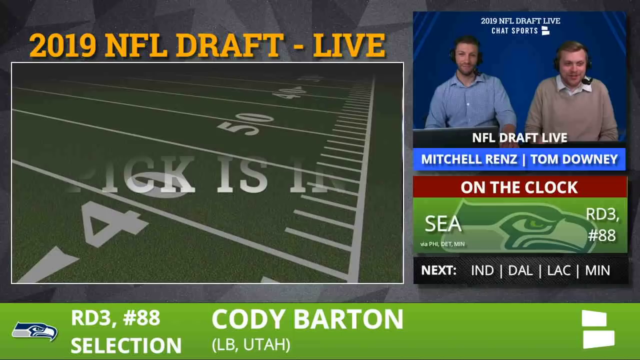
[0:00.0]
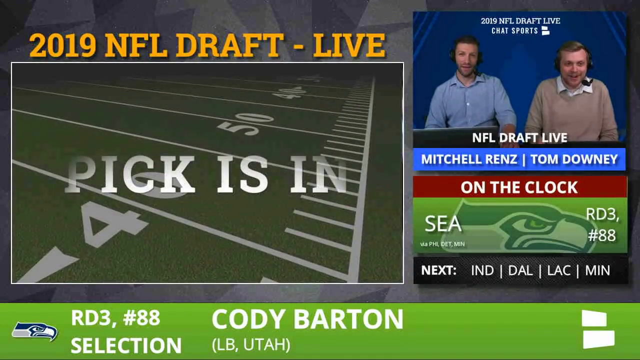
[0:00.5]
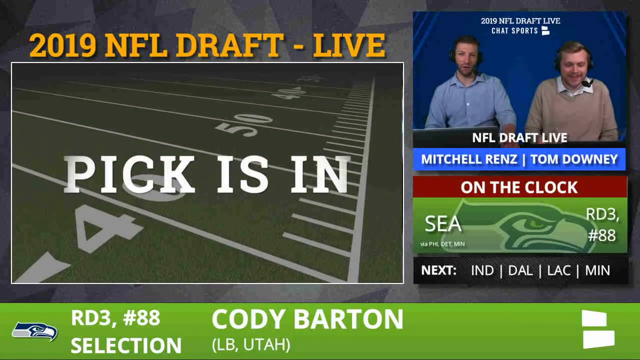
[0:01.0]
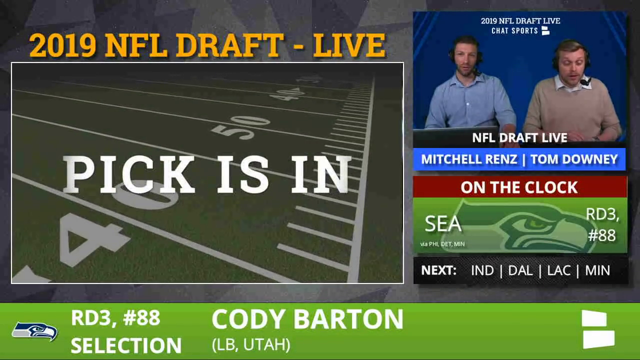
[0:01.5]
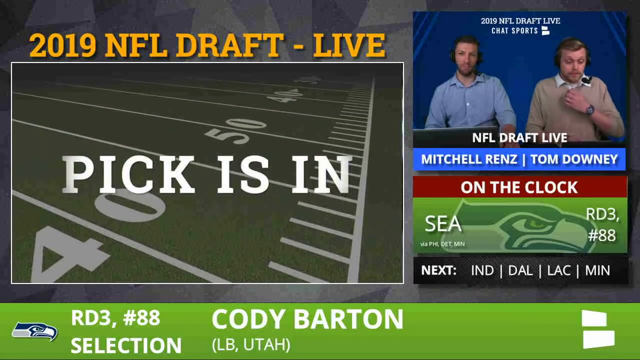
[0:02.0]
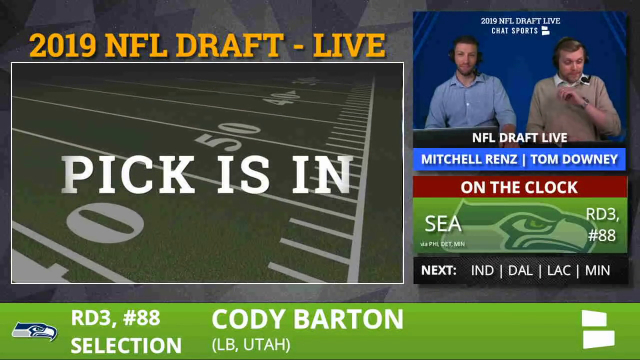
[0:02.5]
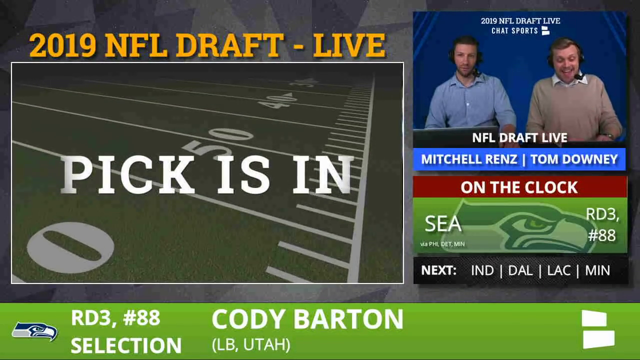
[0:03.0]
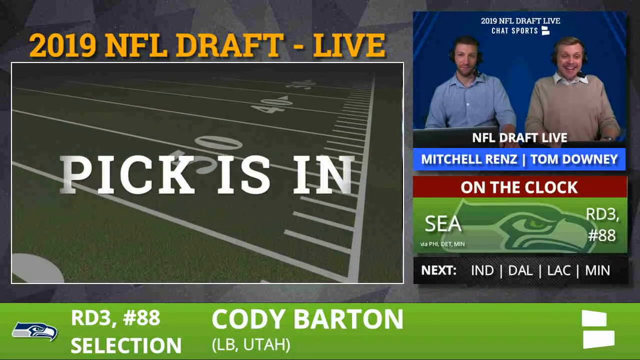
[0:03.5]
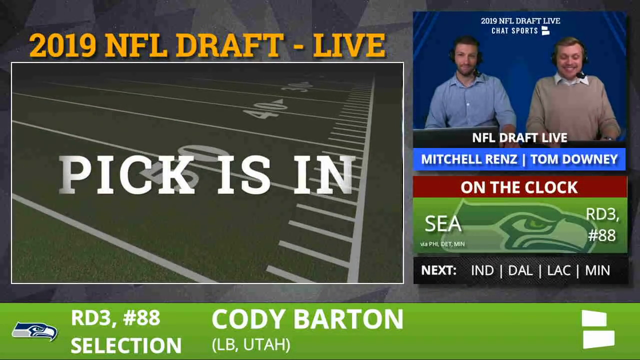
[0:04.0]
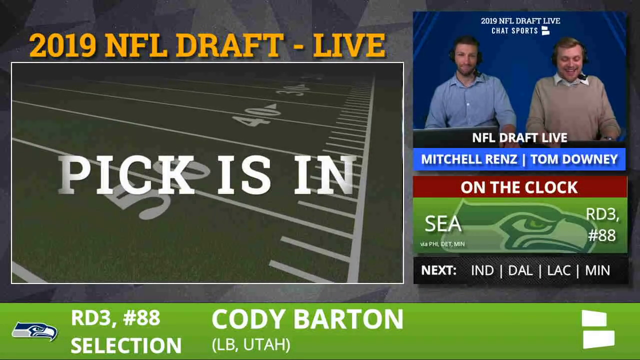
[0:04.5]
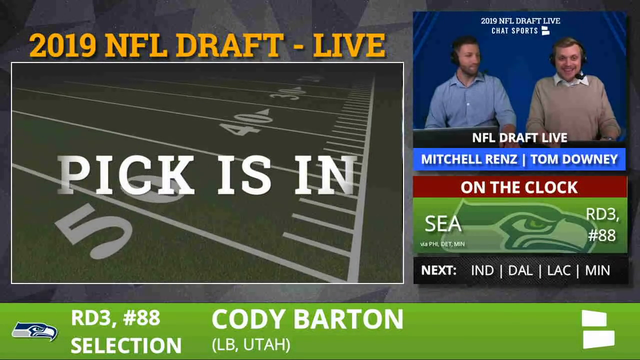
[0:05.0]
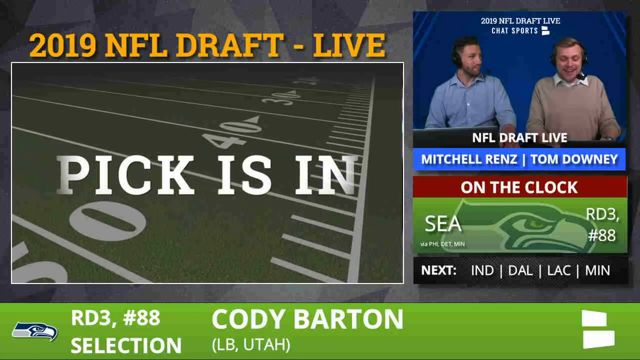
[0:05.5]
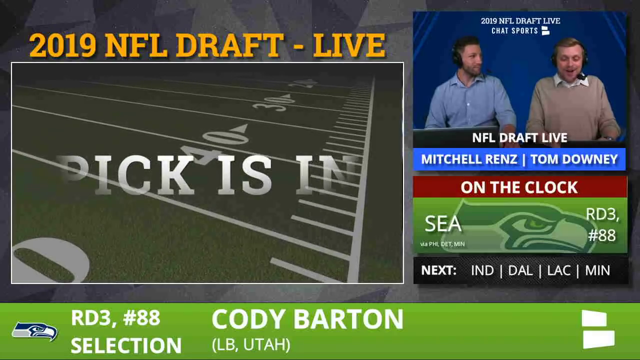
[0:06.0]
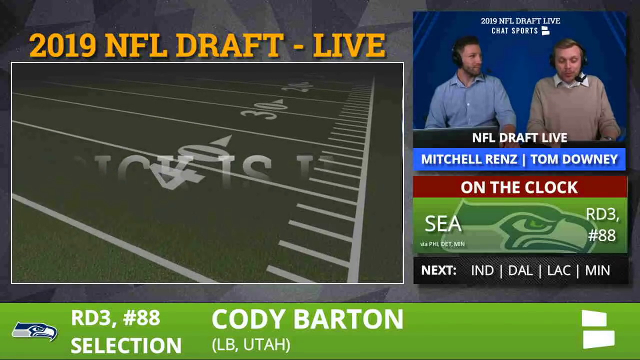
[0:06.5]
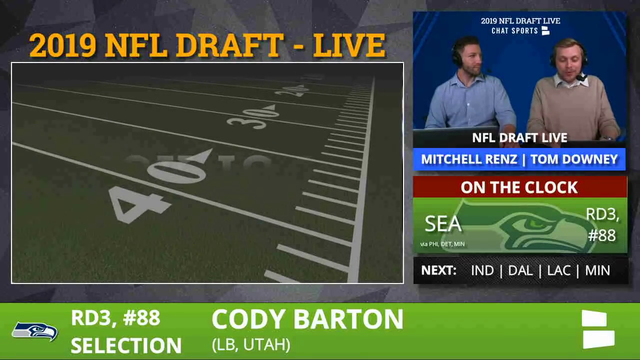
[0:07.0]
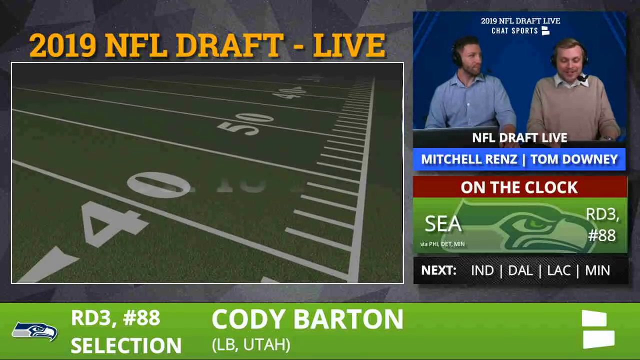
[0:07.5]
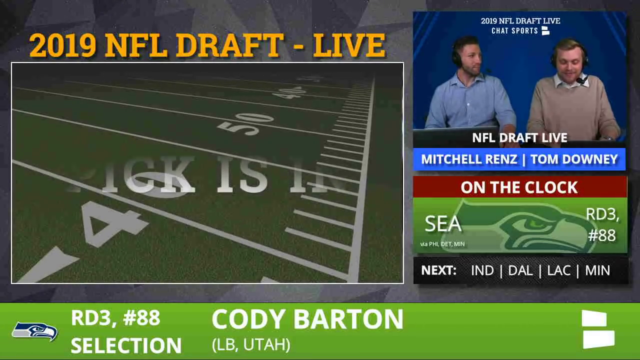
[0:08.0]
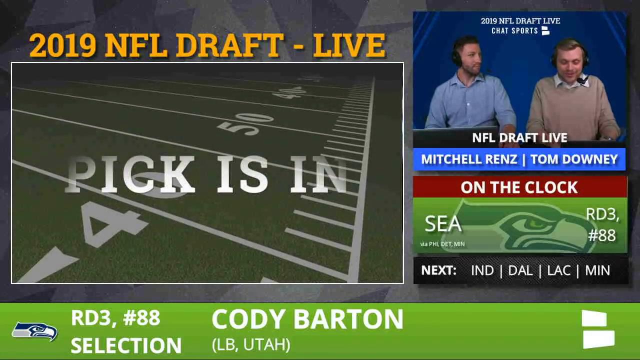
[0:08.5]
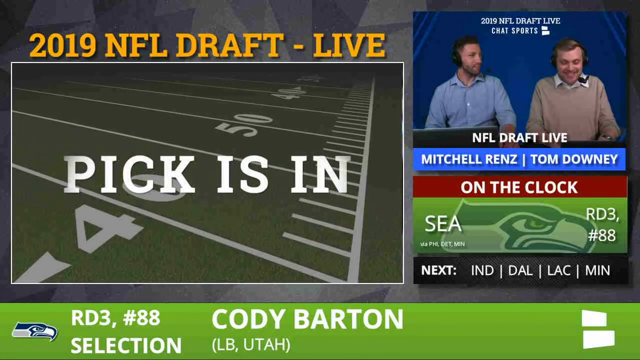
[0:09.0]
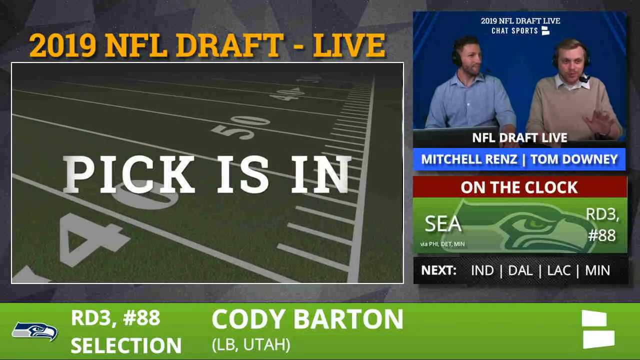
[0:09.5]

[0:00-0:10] The screen mixes text and images. The left part of the screen is sort of text and computer-generated graphics. At the top, in all-capital yellow letters, it reads "2019 NFL Draft - live". Below it is a square box with white, all-capital text at the center reading "pick is in", and behind it are the markings of a football pitch. In the top right corner are two individuals. Text above them reads "2019 NFL Draft live, chat sports", and below them it says "NFL Draft live" along with two names, presumably those of the people providing the commentary: "Mitchell runs | Tom Downey", against a blue background. Below that, white text on a red background reads "on the clock" with "C, SEA" written, and on the right of this box is "RD3, #88", with what looks like a wolf's face in between. Beneath that it says "next, IND, DAL, LAC, MIN", separated by vertical white lines. At the very bottom of the screen, white text on a green background says "Cody Barton", and to its left it says "RDS, #88". The two people in the top right talk, both wearing headphones. The one on the left, Mitchell runs, wears a blue shirt unbuttoned at the collar; he turns his head to his left, showing the right side of his face, and looks at his colleague, who wears a gray sweater with a shirt collar visible underneath and has his head bent down. In the box on the left, text appears that says "pick is in".